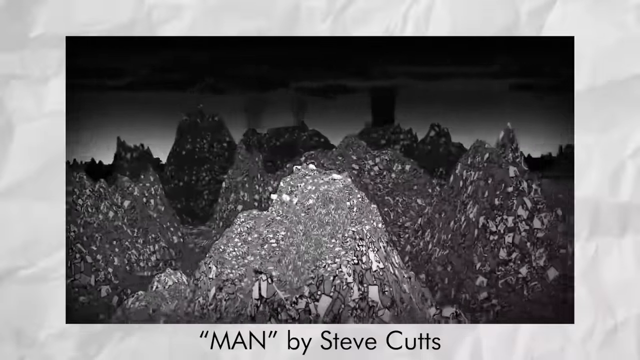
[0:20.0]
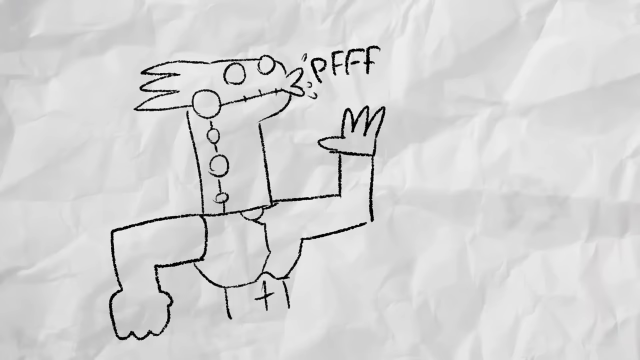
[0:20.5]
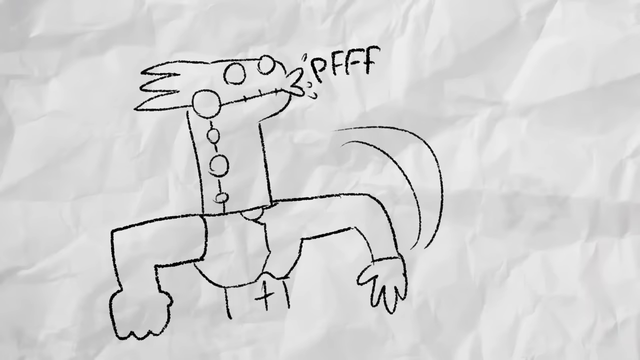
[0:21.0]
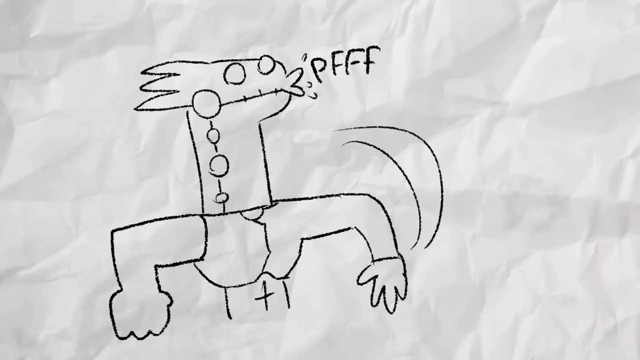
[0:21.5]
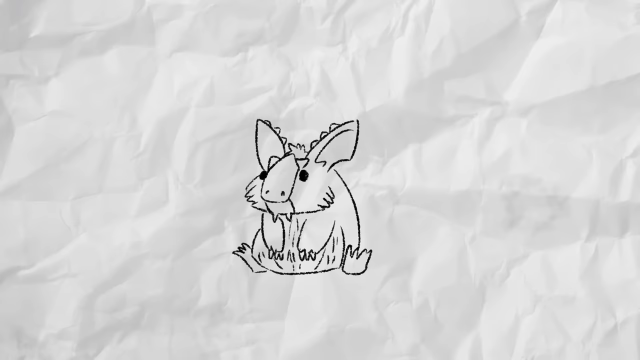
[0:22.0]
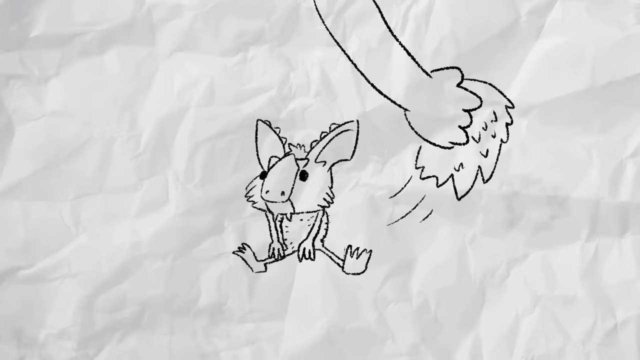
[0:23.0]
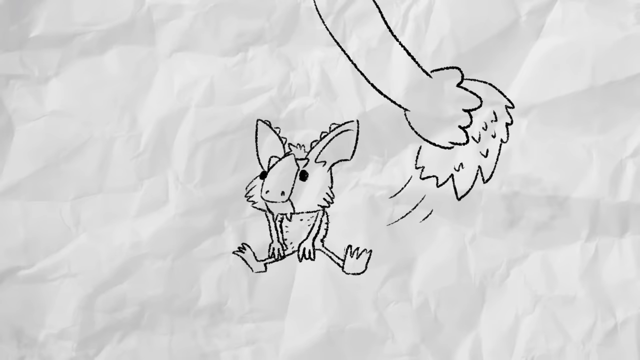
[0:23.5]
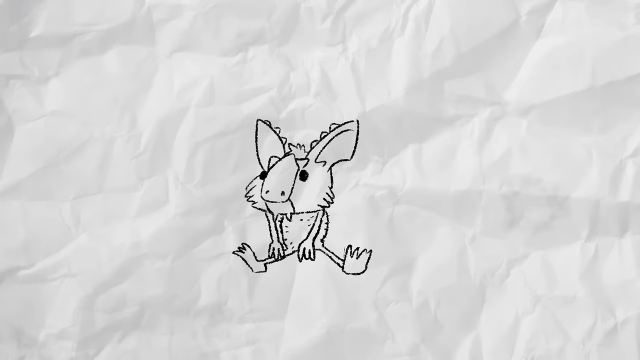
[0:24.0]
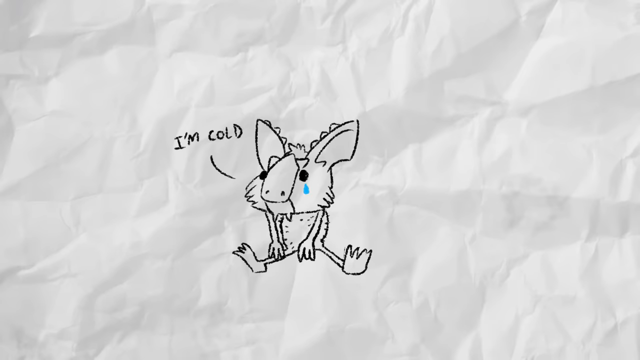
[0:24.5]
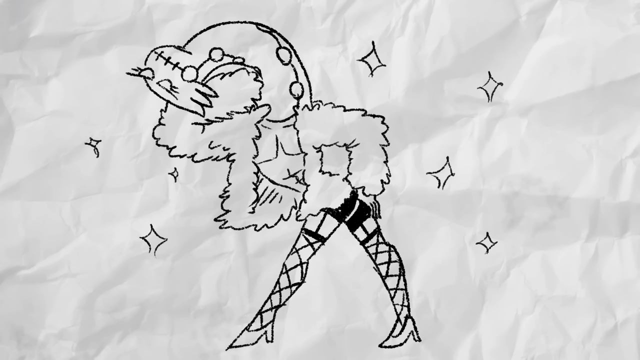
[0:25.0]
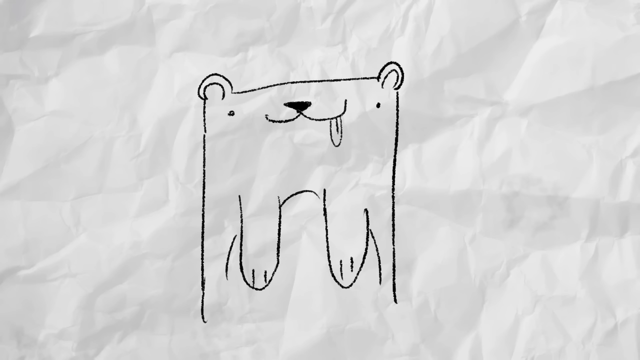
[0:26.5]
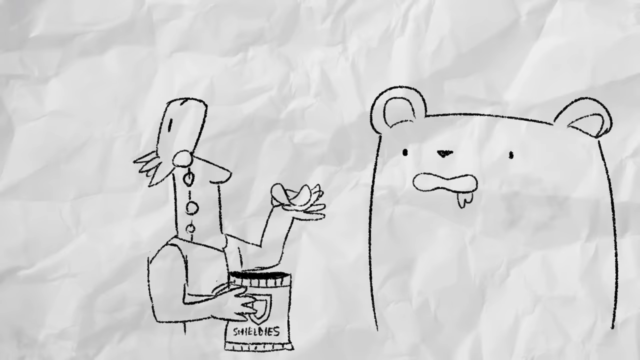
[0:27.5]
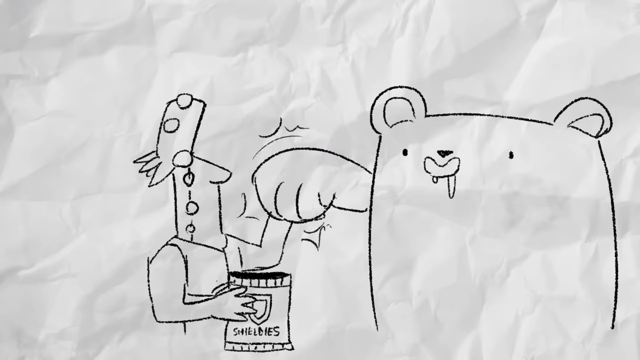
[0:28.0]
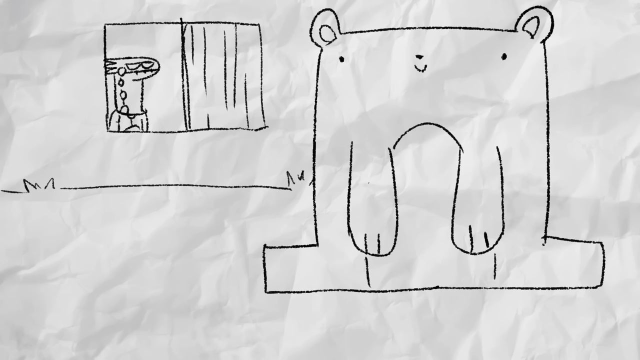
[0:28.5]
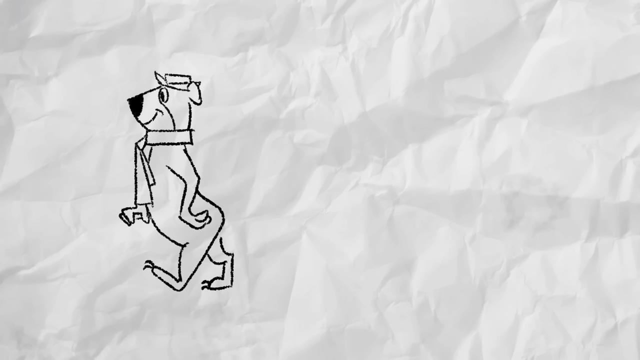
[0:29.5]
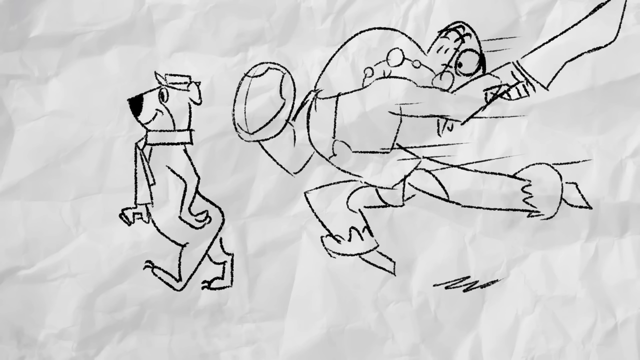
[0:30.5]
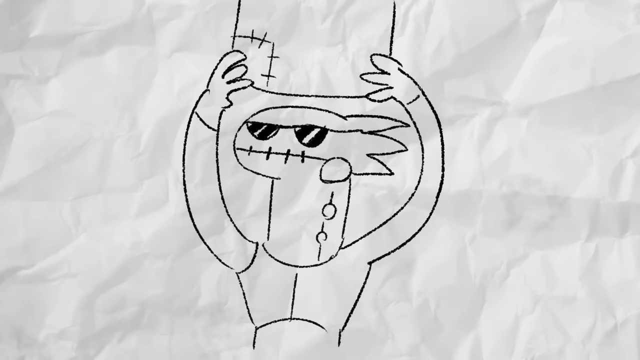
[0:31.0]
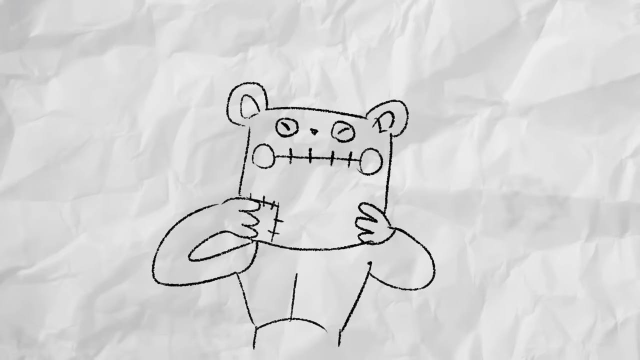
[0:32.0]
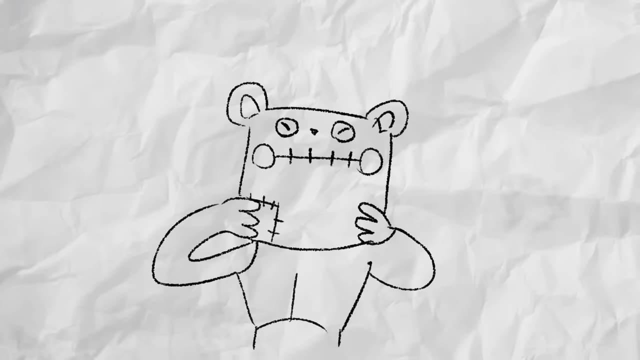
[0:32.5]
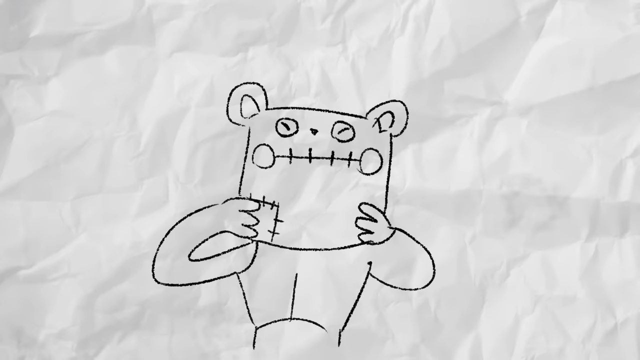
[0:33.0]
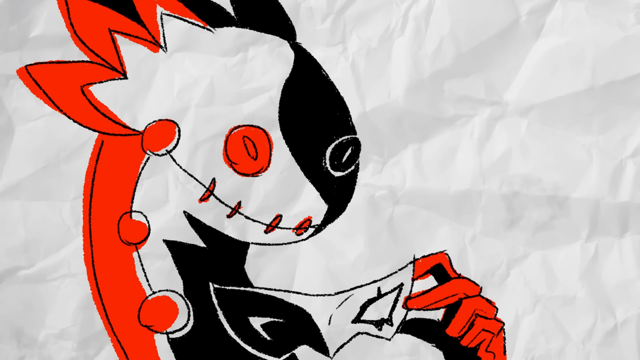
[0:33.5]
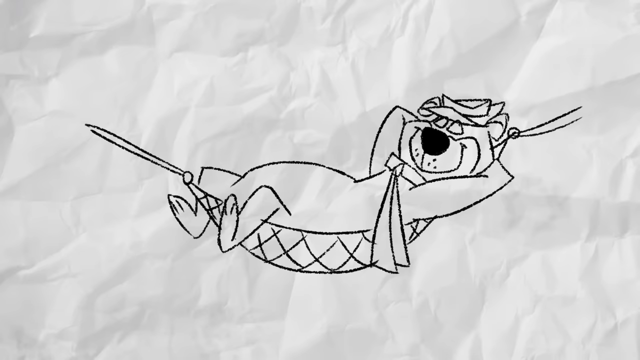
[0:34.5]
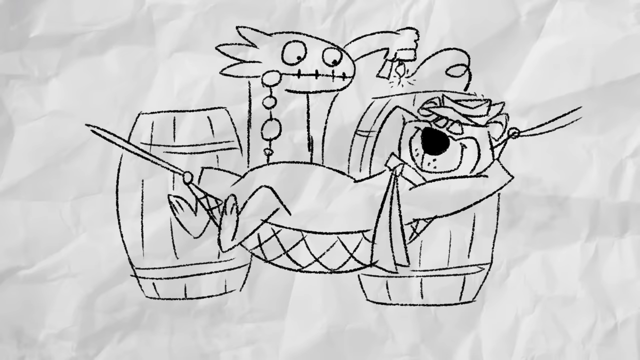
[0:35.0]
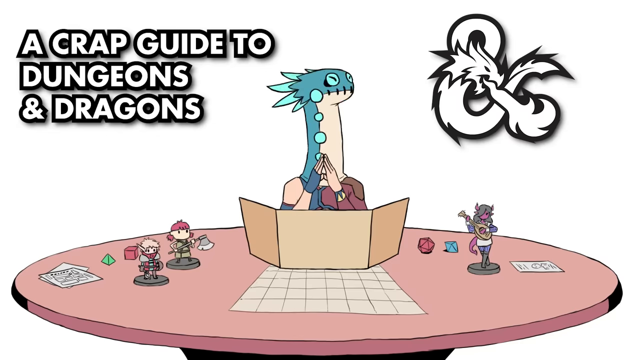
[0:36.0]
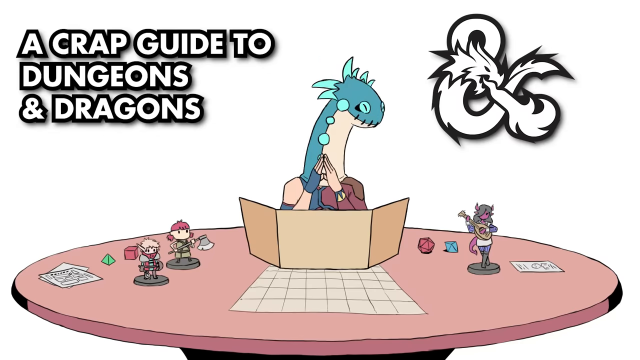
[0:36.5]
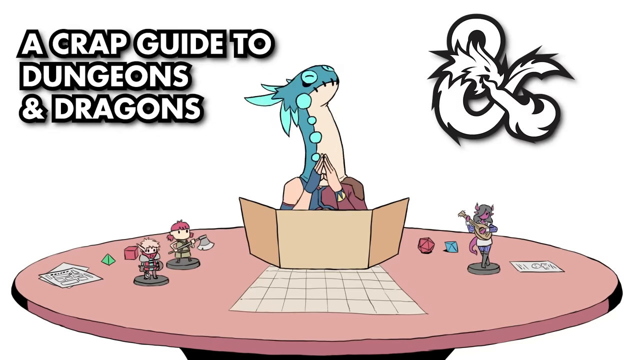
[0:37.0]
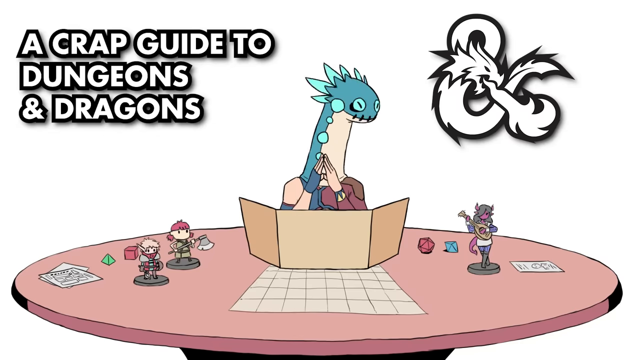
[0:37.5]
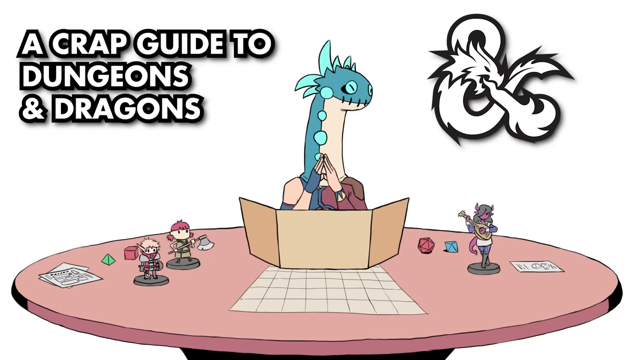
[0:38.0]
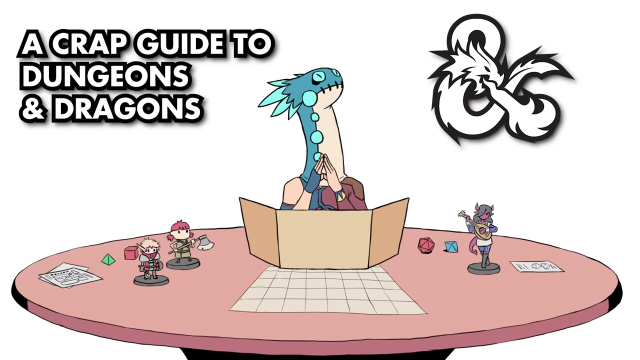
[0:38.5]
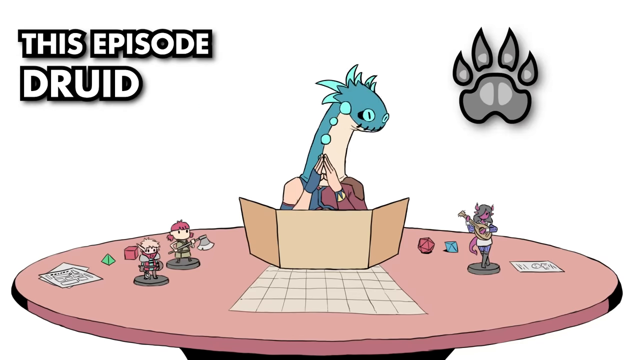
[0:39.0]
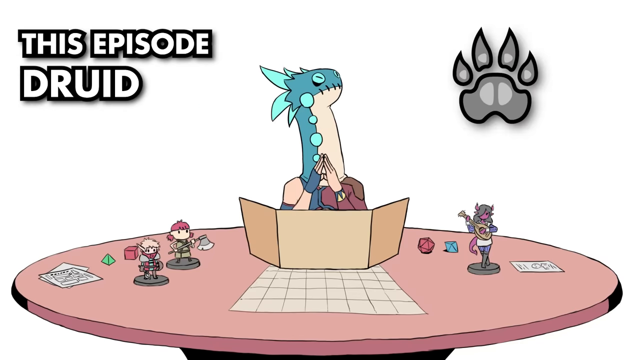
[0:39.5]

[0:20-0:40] A series of black-and-white animated drawings begins with an illustration of what looks like someone sitting on a mountain of garbage, with many more mountains around him; at the bottom of the screen it says "Man" by Steve Cutts. A series of pencil drawings of animals follows. One of the animals has his fur ripped off and says, "I'm Cold." Many drawings of bears appear, including Yogi Bear being chased by another character, a lizard-like character putting a bear mask on, and Yogi Bear sleeping in a hammock. The scene then changes to a title card that reads "A Crap Guide to Dungeons and Dragons." This one is in color: a dragon character sits at a table with his hands in front of him, and there are small figurines on the table. He nods his head up and down, and the text on the screen changes to read "This Episode Druid."